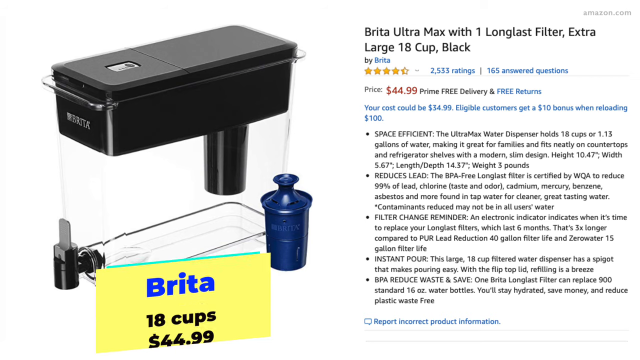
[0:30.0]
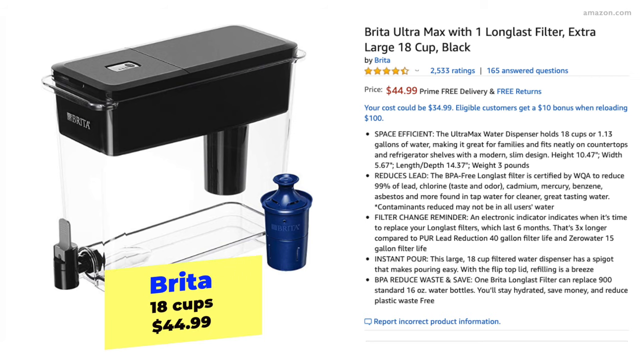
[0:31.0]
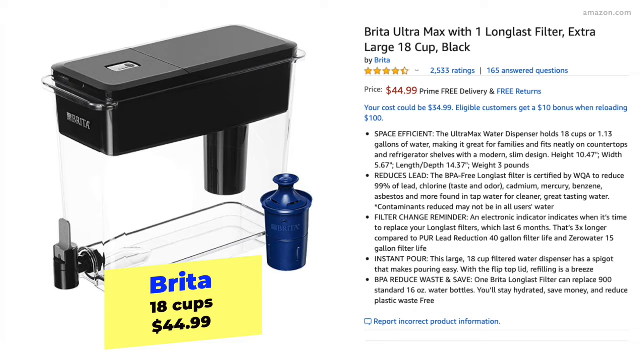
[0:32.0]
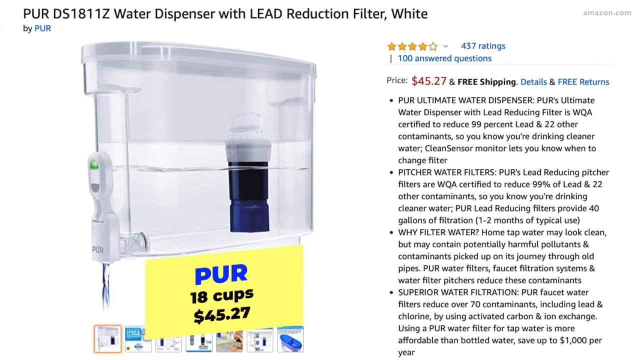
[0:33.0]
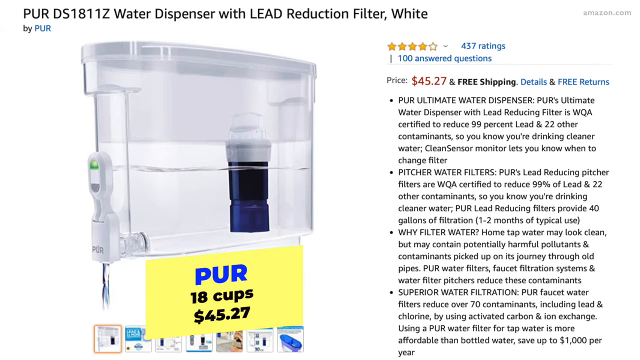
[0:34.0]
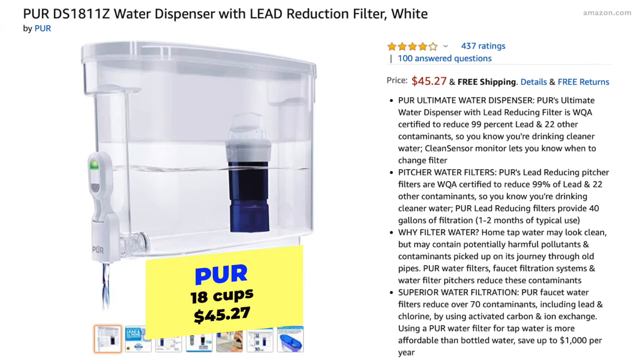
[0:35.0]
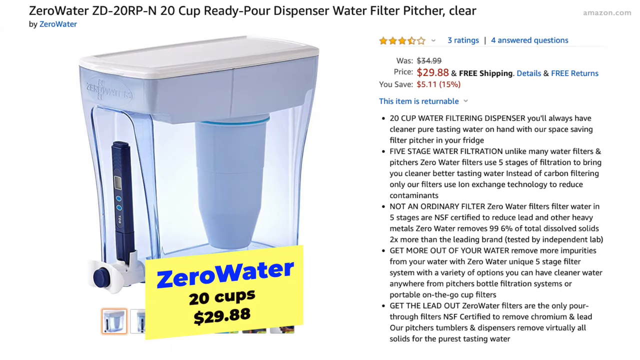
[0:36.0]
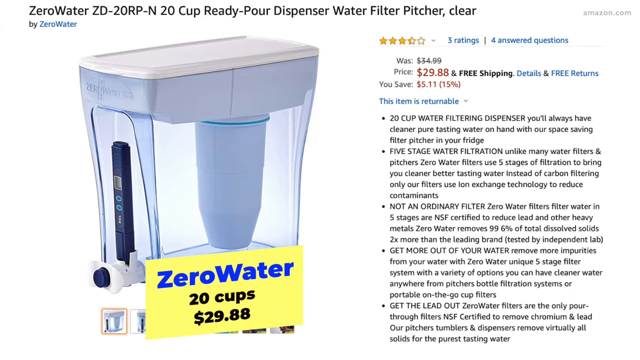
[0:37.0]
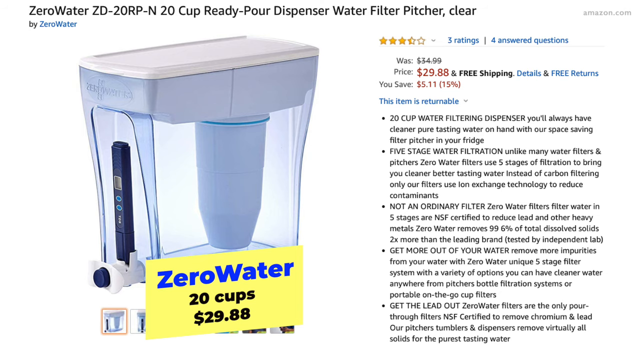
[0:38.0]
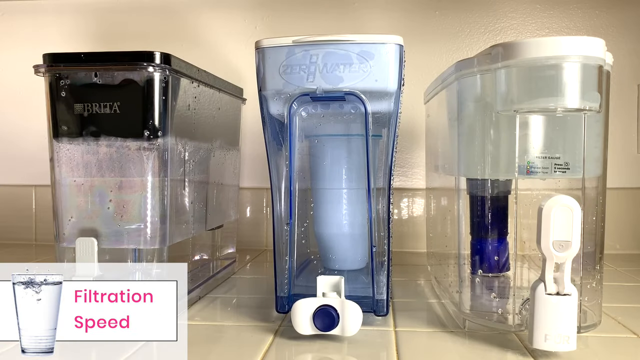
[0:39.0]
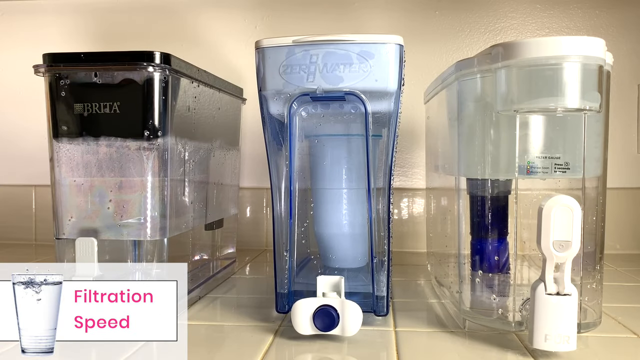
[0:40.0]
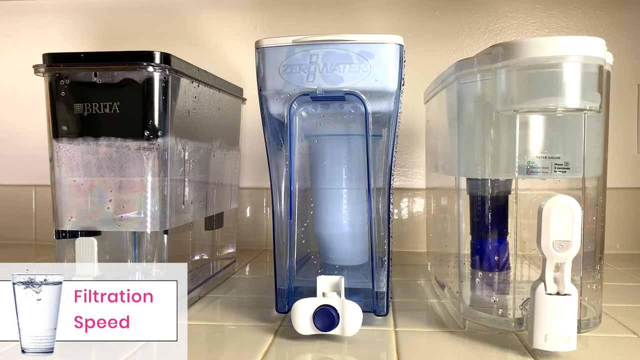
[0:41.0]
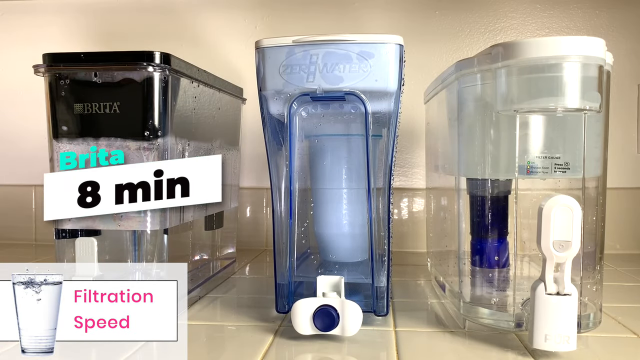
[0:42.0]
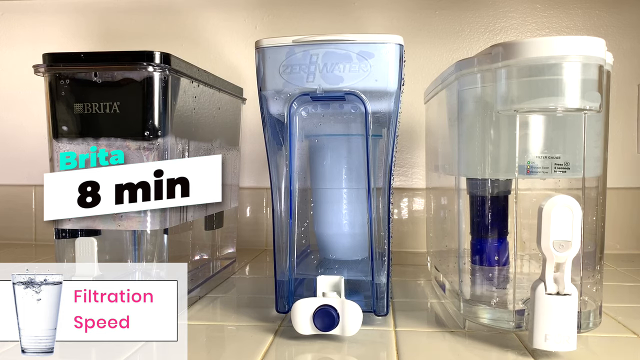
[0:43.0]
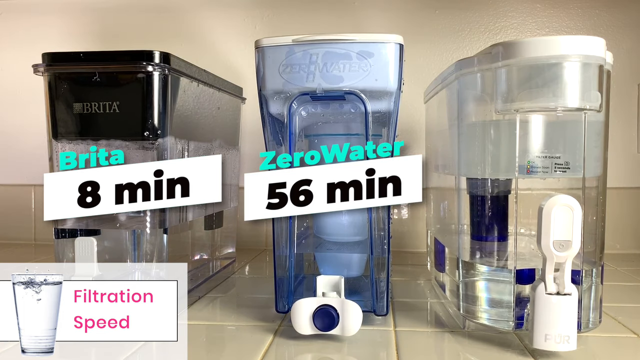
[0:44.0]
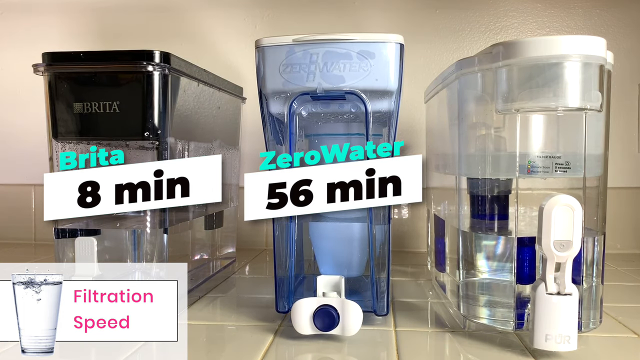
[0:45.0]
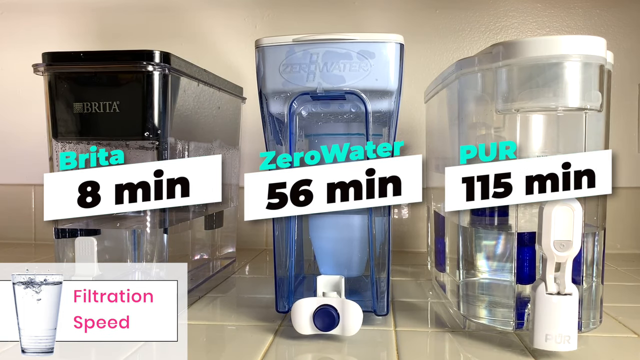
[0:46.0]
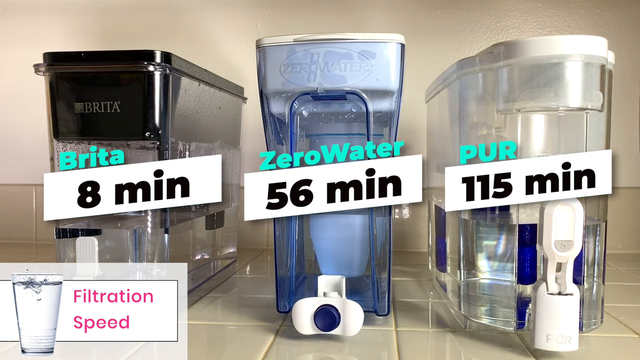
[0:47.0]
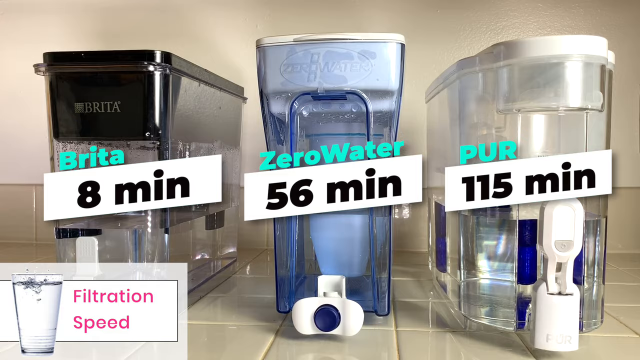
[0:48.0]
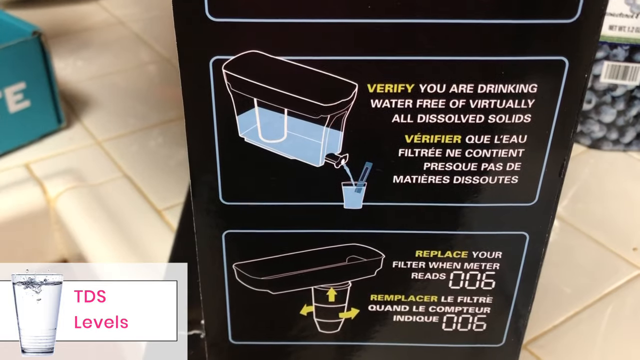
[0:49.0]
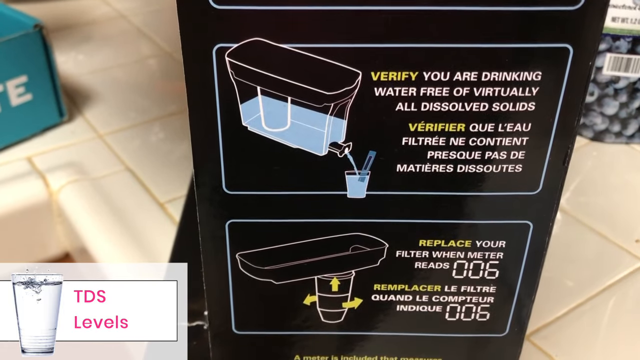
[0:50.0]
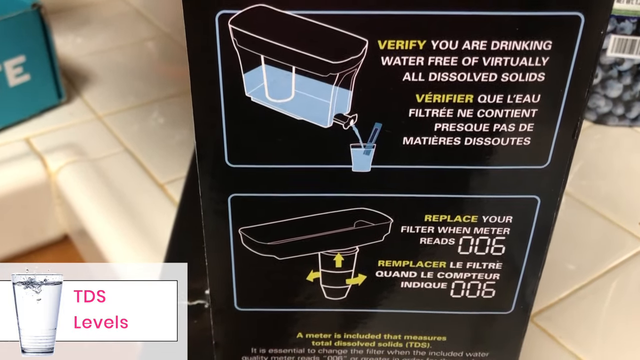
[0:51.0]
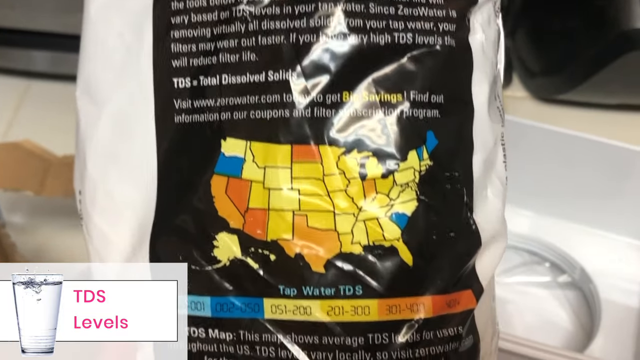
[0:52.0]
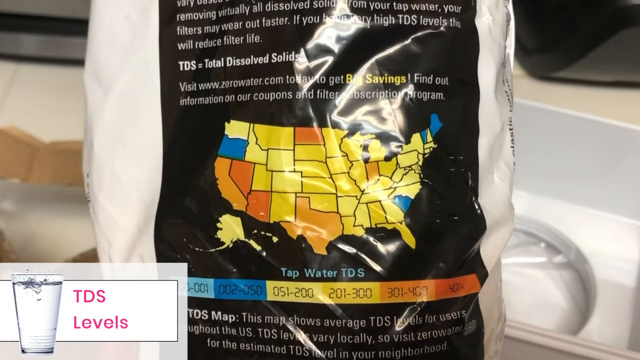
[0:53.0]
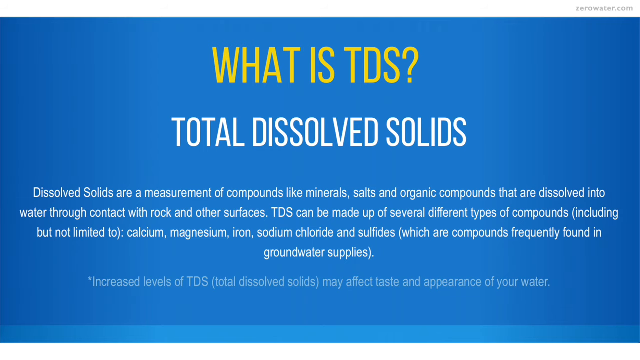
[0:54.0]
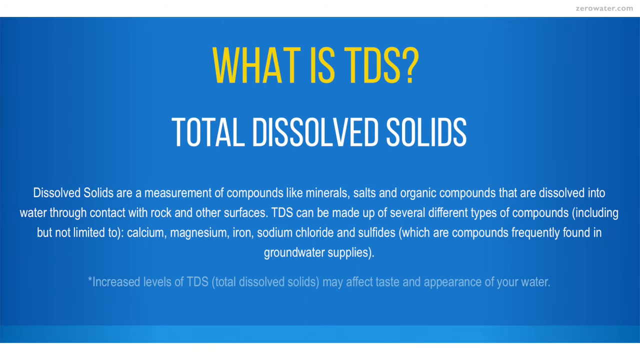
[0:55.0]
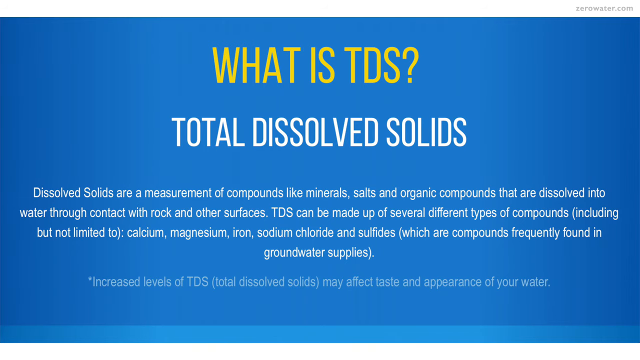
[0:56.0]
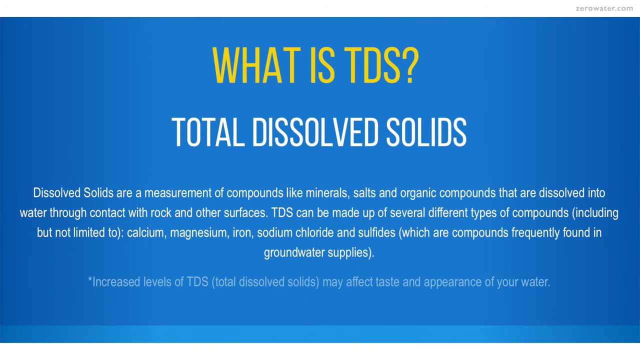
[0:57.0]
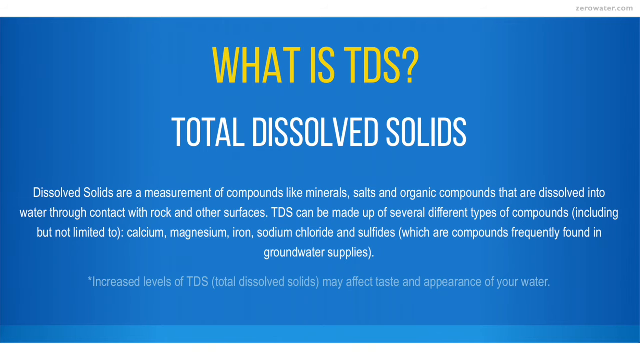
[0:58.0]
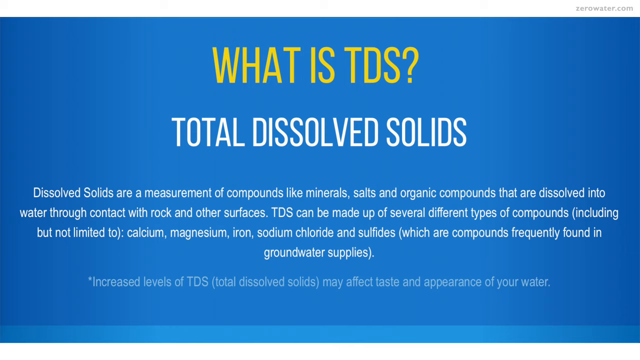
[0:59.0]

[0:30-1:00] The person scrolls down, and a price is shown for each water filter: Brita at $44.99 for 18 cups, Purr also holding 18 cups at $45.27, and Zero Water holding 20 cups at $29.88. Each filter's page shows a different price and different ratings: Brita has 2,533 ratings, close to a 5-star rating; Purr has 437 ratings with 4.0 stars; and Zero Water has 3 ratings with 3.5 stars. Next, the same three filters are shown being filled with water, with the time each takes to filter water through its chambers: Brita at eight minutes, Zero Water at 56 minutes, and Purr at 115 minutes. A black box is shown containing a TDS (total dissolved solids) water testing kit.